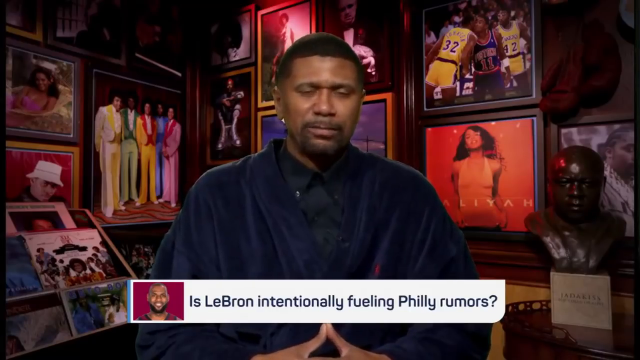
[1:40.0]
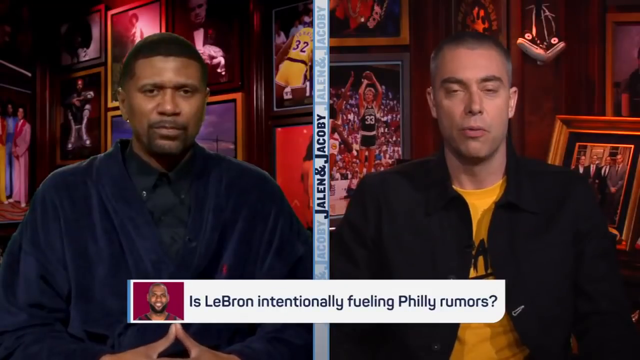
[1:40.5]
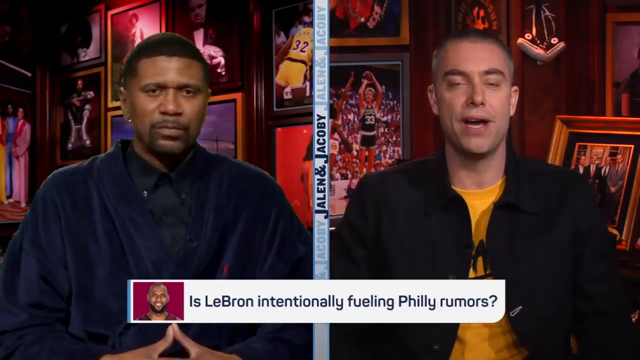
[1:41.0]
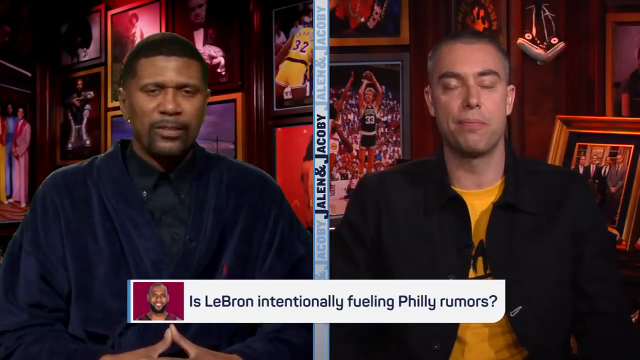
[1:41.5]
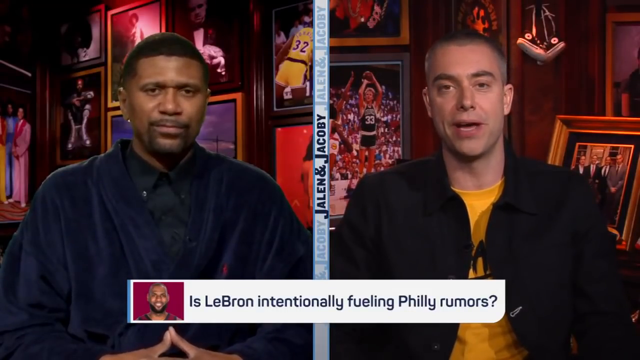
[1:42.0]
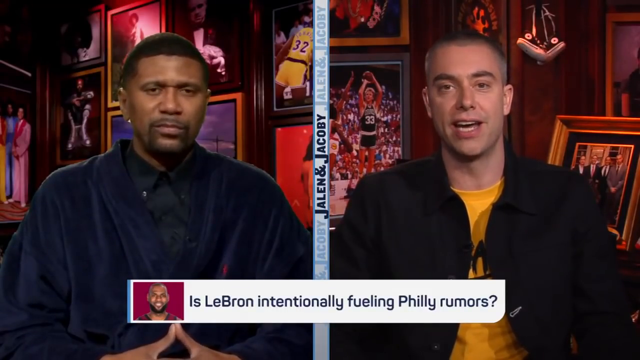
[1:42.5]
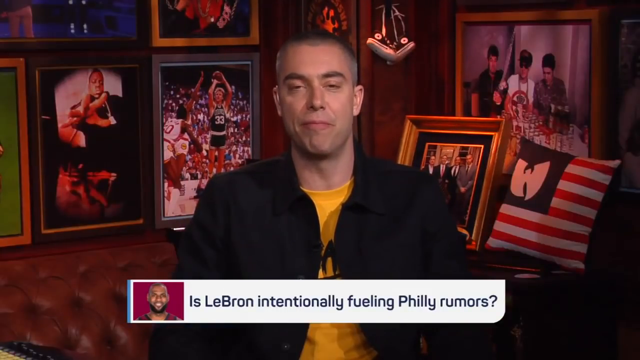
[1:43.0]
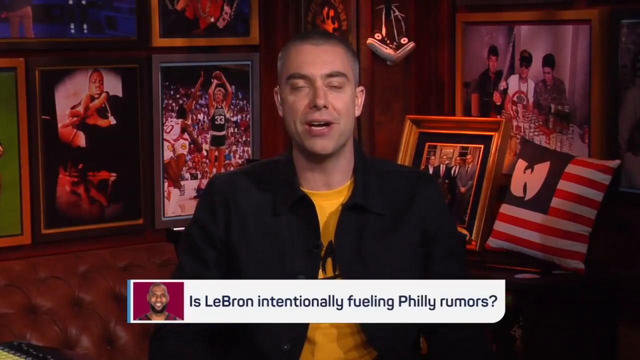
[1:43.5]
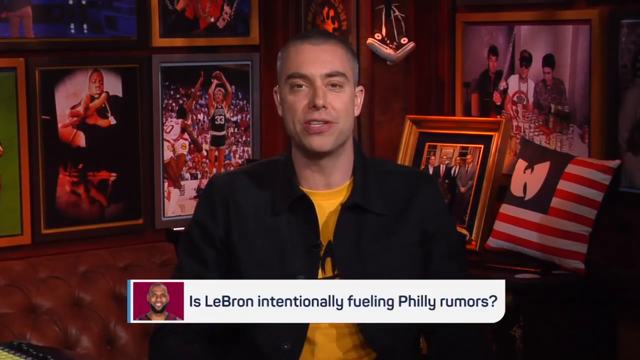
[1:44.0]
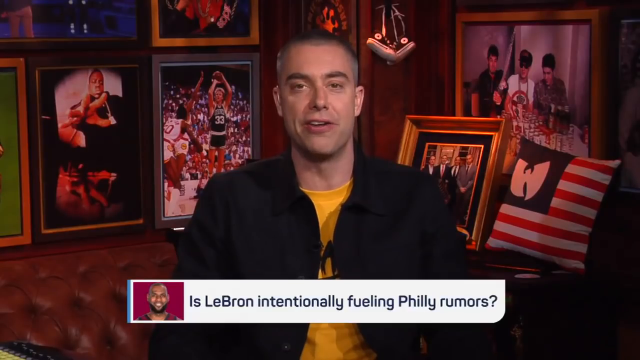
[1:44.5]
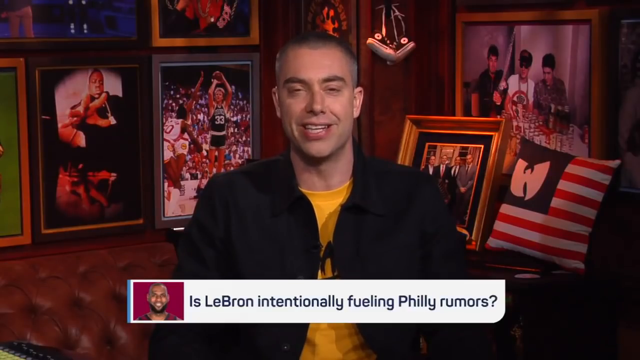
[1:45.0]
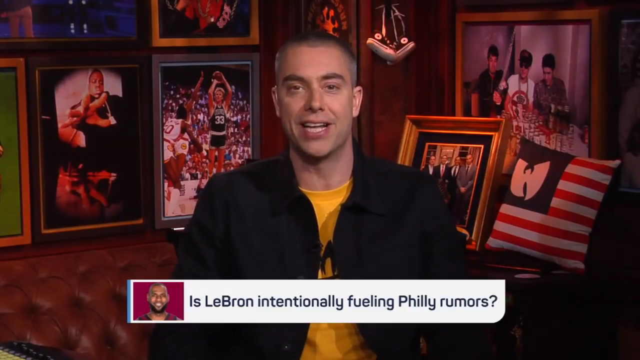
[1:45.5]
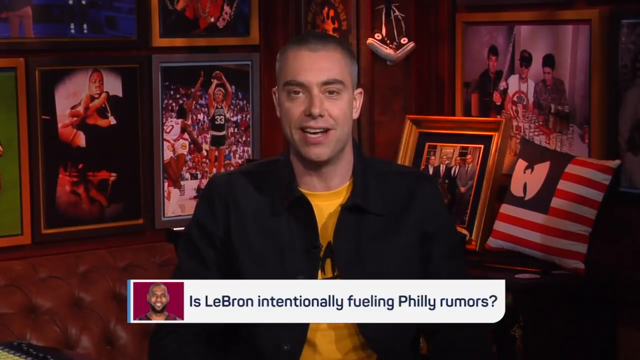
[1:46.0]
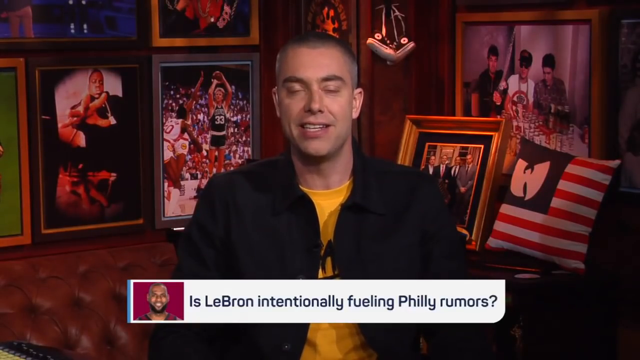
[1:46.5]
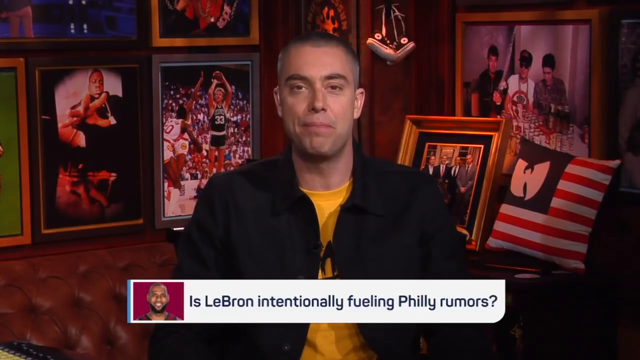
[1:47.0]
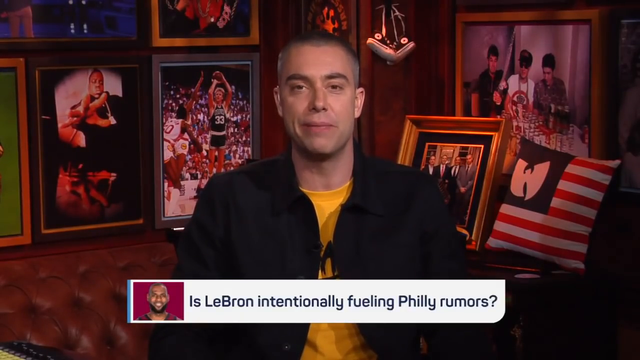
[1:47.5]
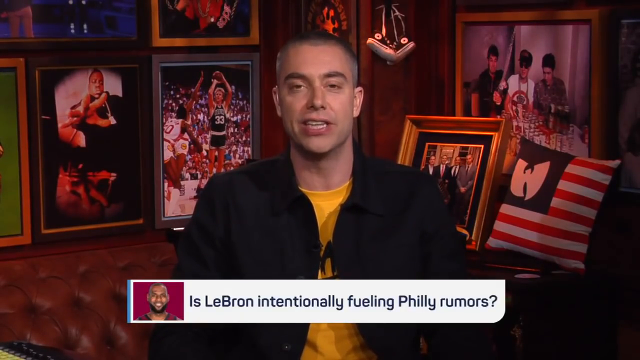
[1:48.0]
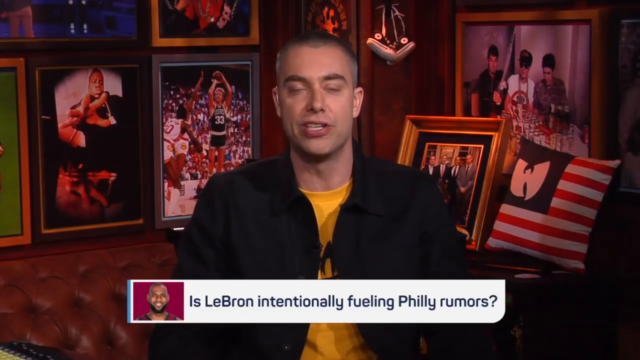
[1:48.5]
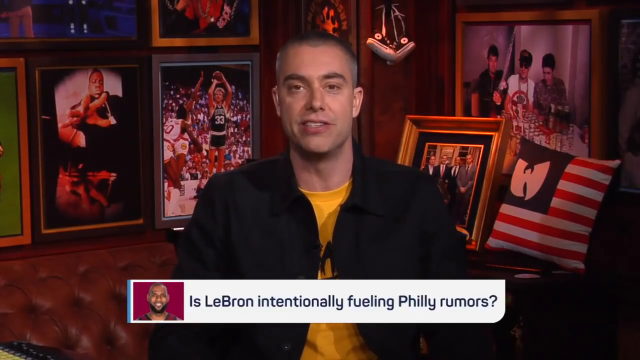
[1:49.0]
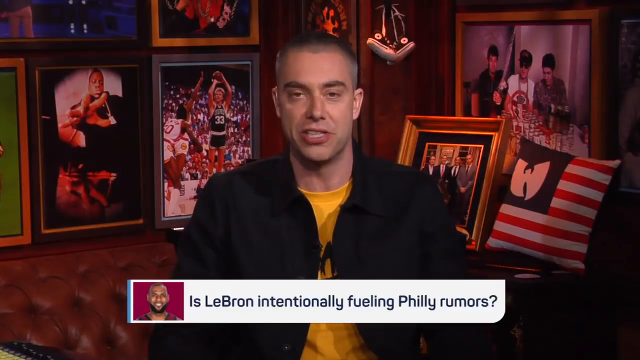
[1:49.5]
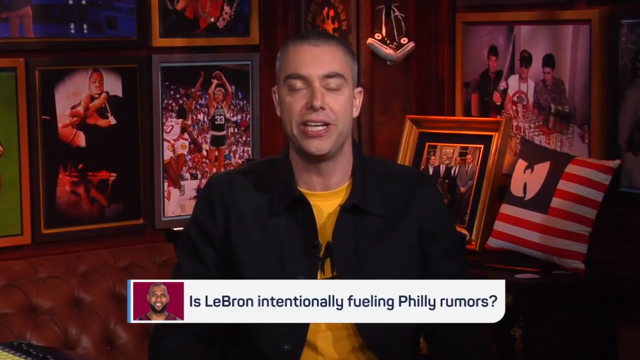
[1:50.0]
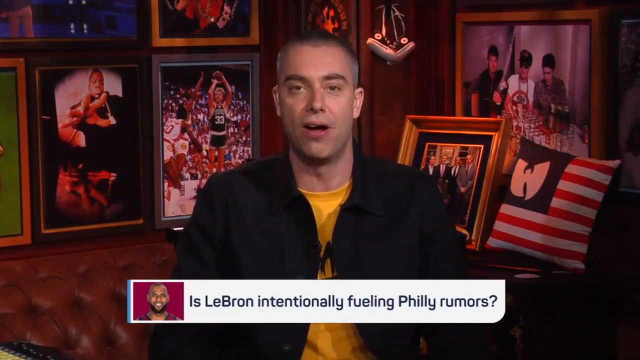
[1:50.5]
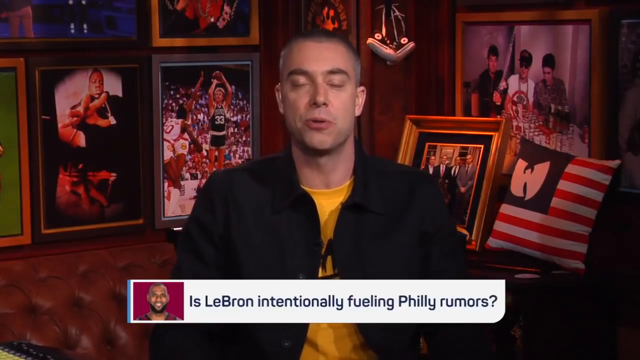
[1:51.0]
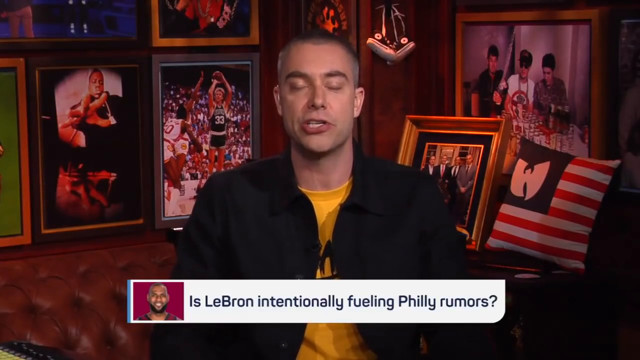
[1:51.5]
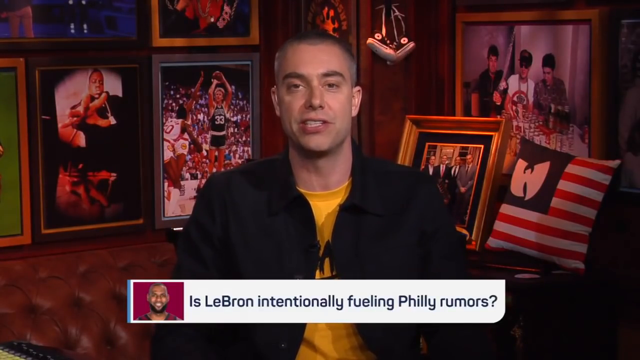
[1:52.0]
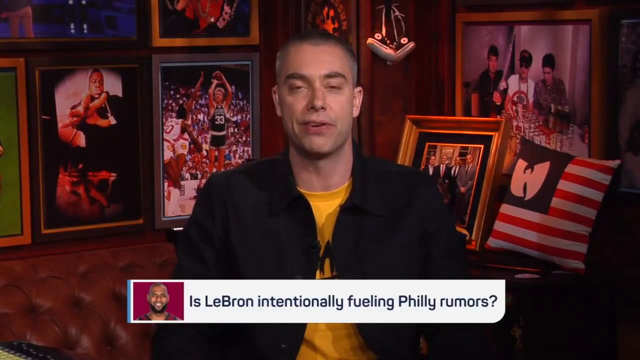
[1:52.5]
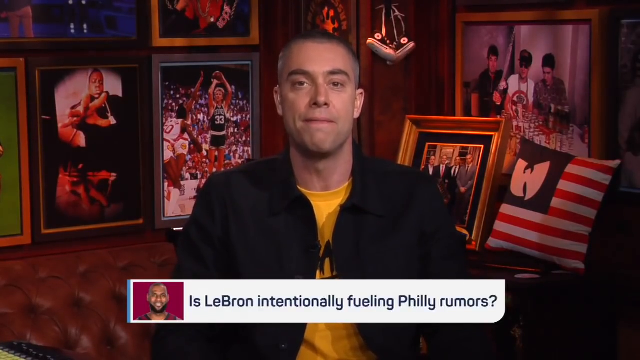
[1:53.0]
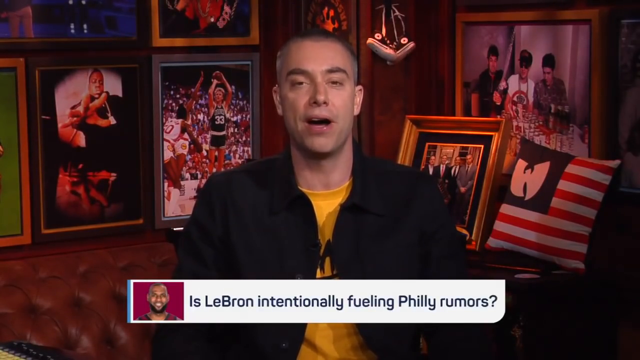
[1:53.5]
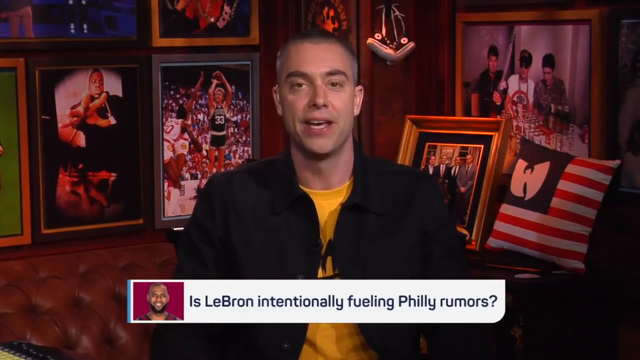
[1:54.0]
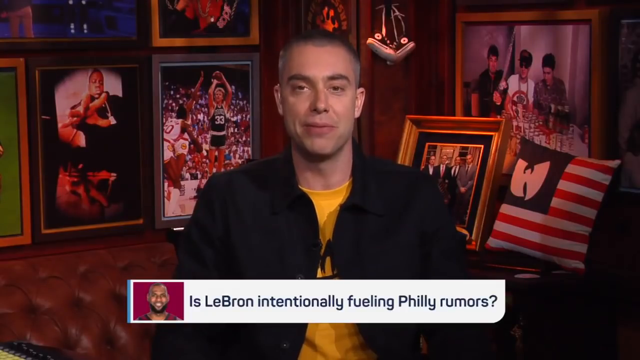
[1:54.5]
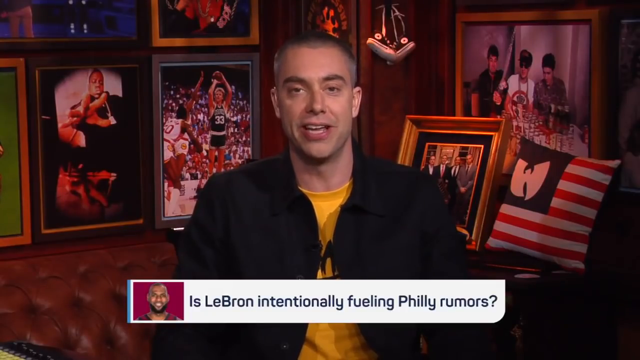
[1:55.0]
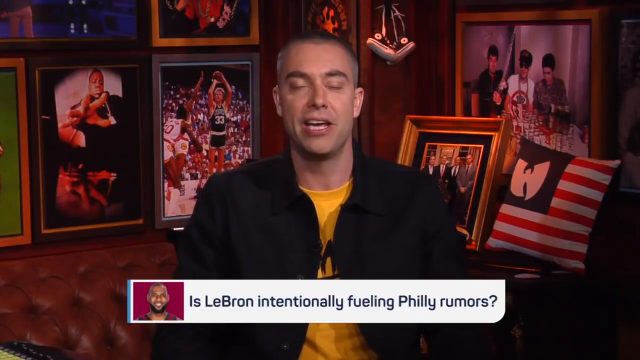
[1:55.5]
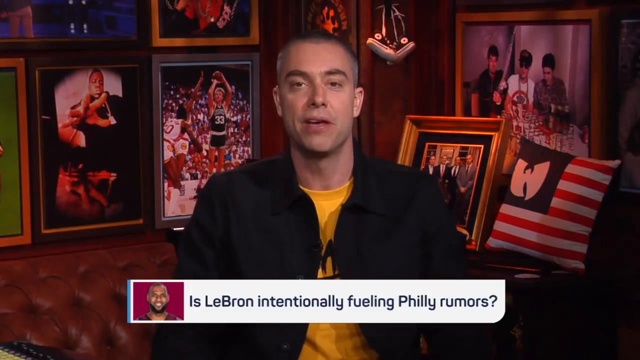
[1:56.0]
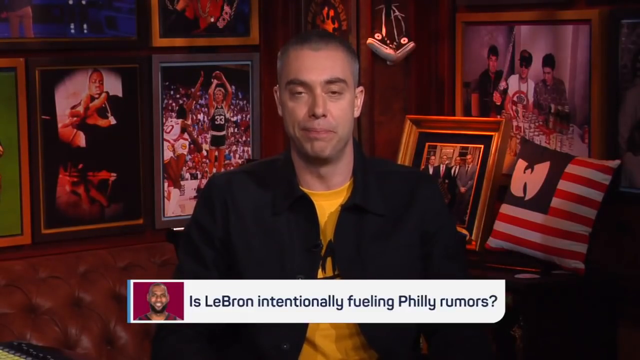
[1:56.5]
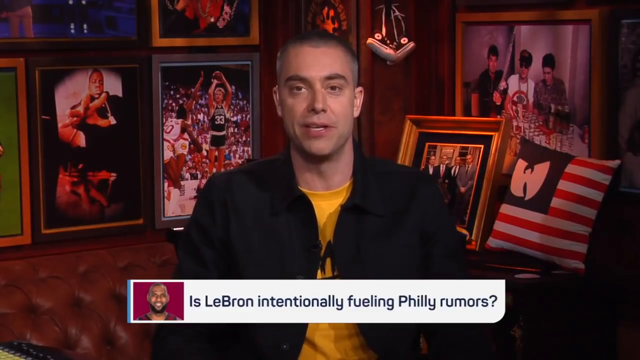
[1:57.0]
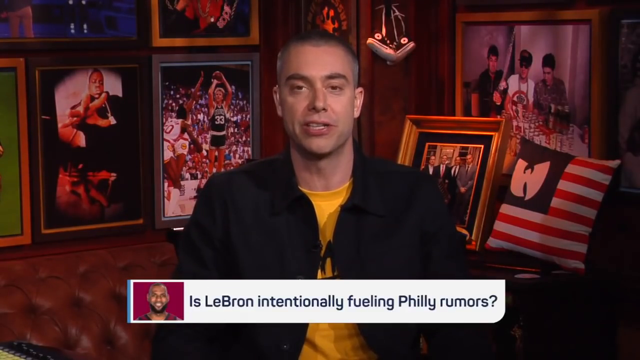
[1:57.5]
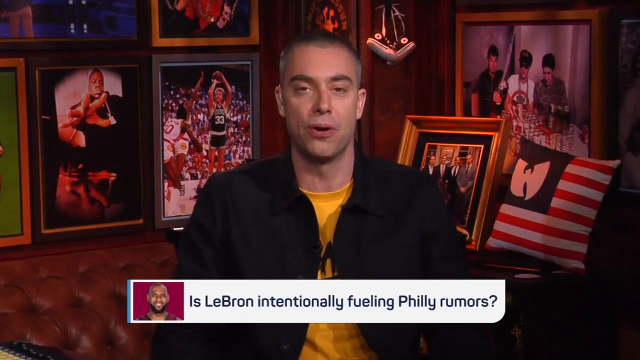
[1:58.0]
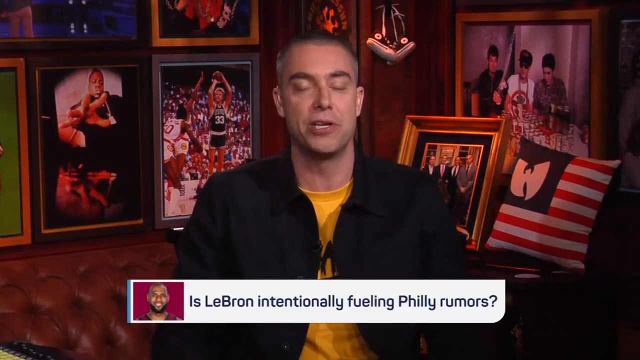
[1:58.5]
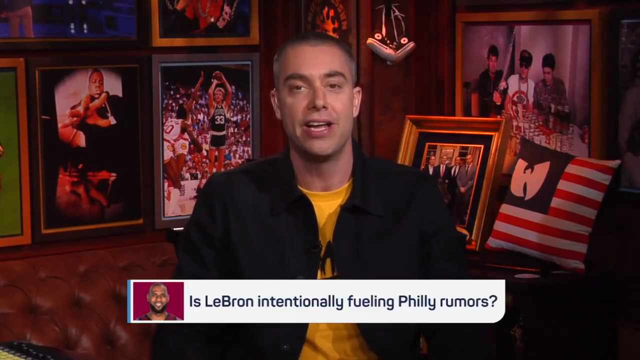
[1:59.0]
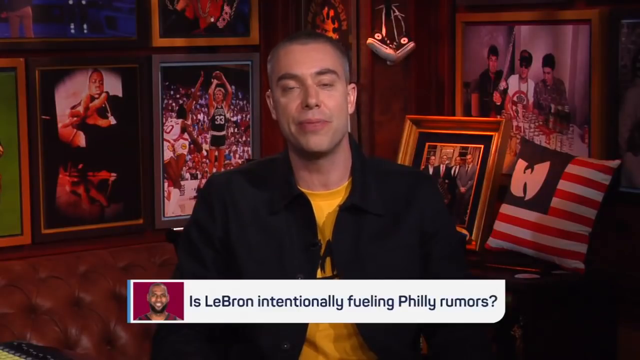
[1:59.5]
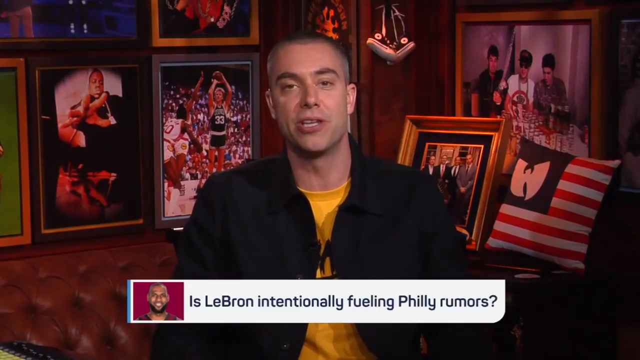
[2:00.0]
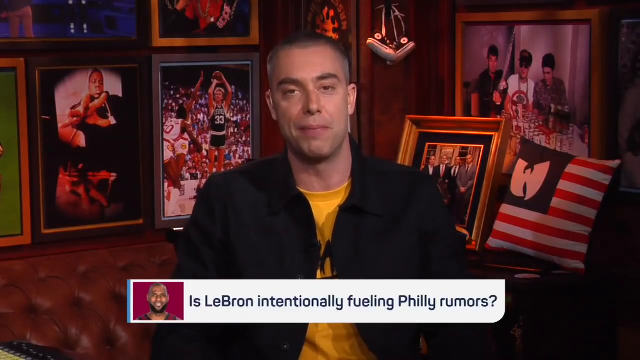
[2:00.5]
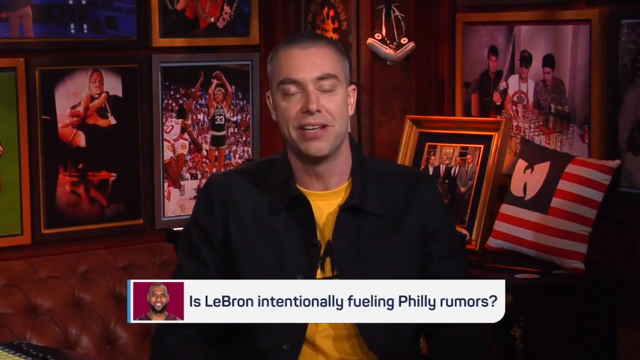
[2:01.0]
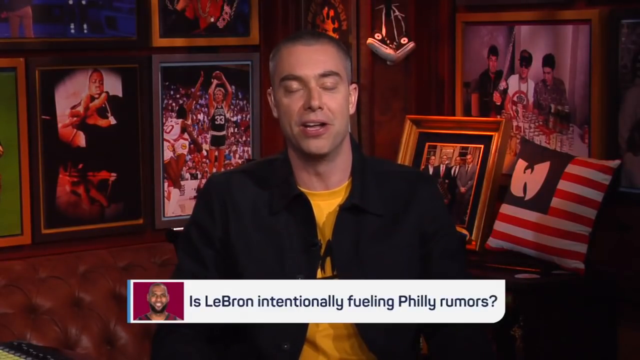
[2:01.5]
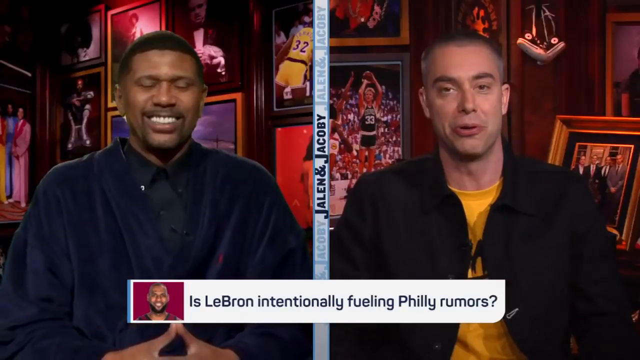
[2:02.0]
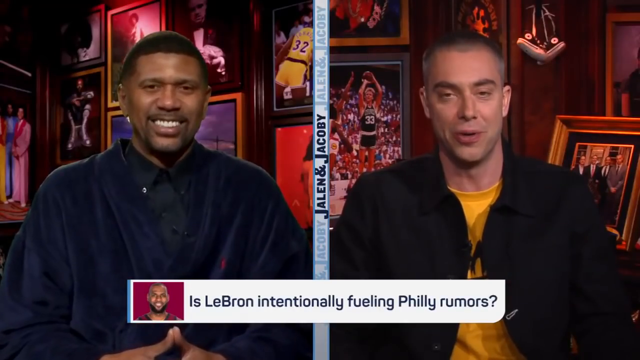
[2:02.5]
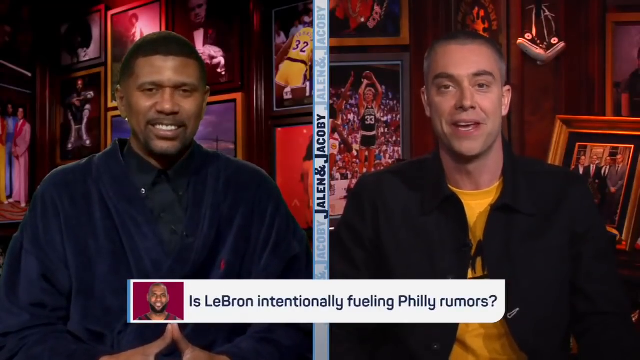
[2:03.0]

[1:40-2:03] The split screen continues with Jalen Rose and another man. The video goes to the other man, a white man in a dark shirt and a yellow undershirt; he appears to have an American flag pillow, along with a bunch of sports memorabilia and a light in the background. On the marquee below is a picture of LeBron James, and the question reads "is LeBron intentionally fueling the rumors that he could be potentially traded to the Philadelphia 76ers?" Statements from Sixers players, including Ben Simmons and Joel Embiid, are shown.